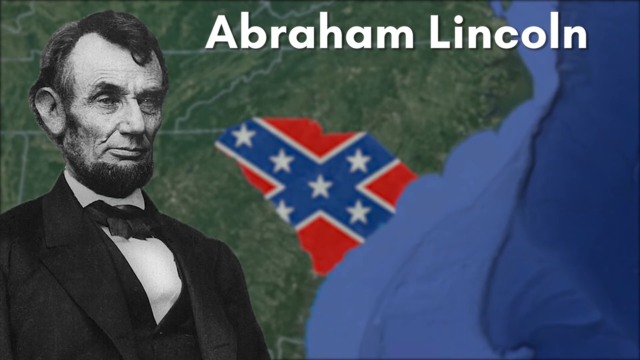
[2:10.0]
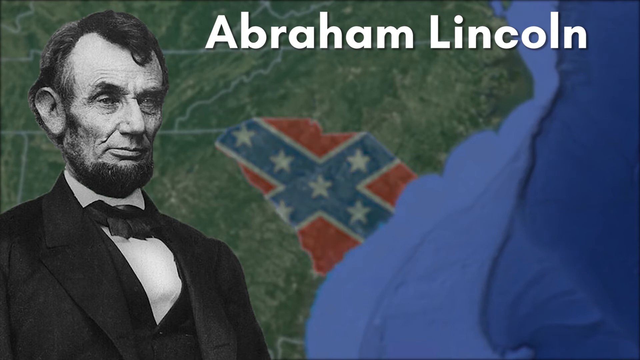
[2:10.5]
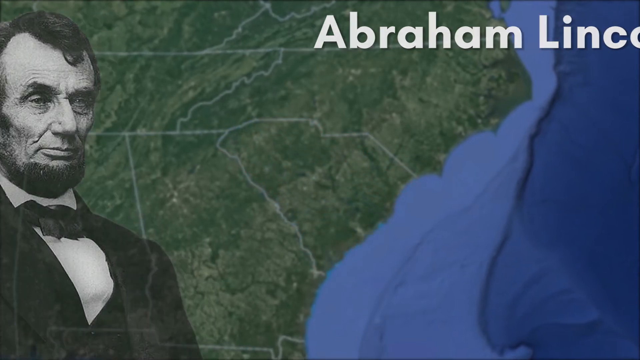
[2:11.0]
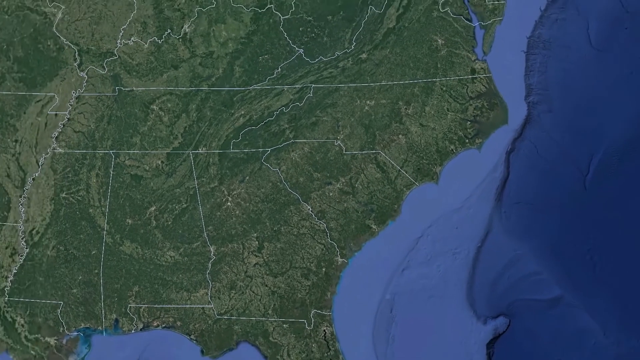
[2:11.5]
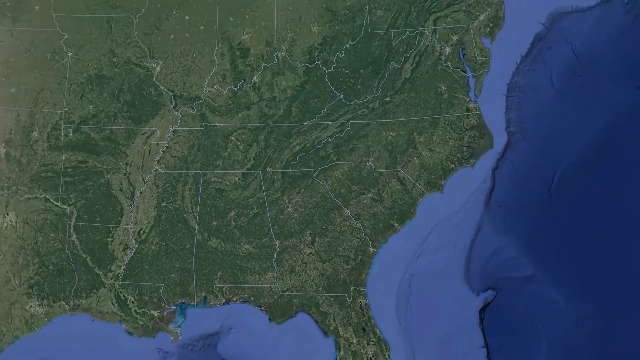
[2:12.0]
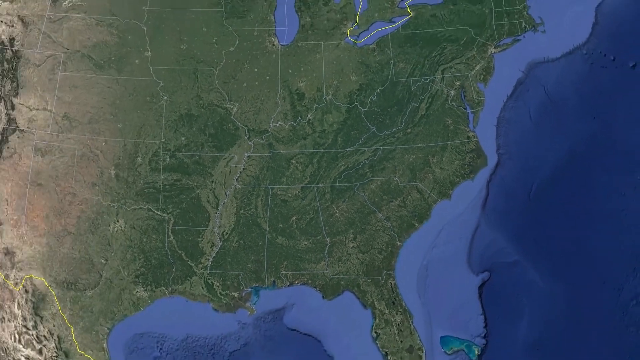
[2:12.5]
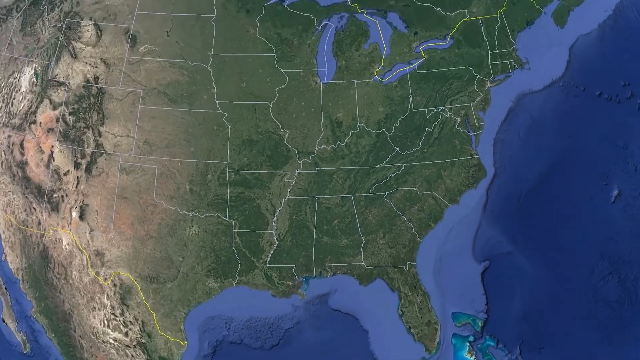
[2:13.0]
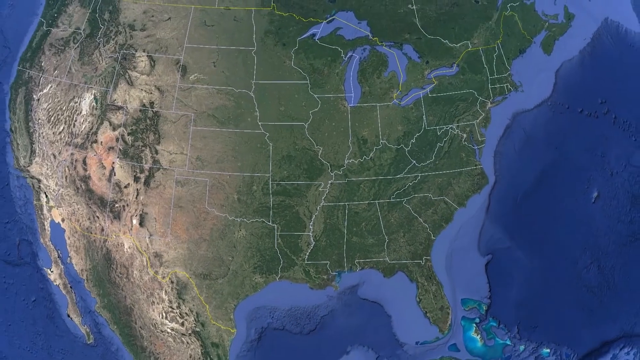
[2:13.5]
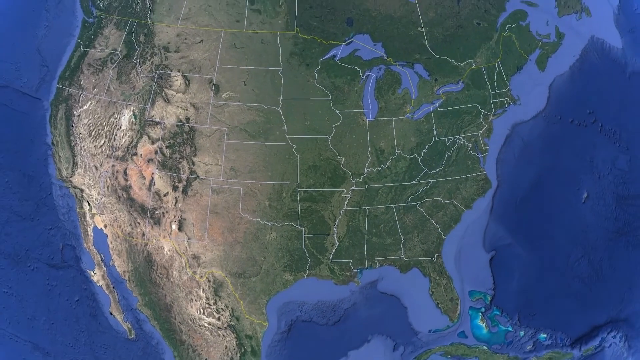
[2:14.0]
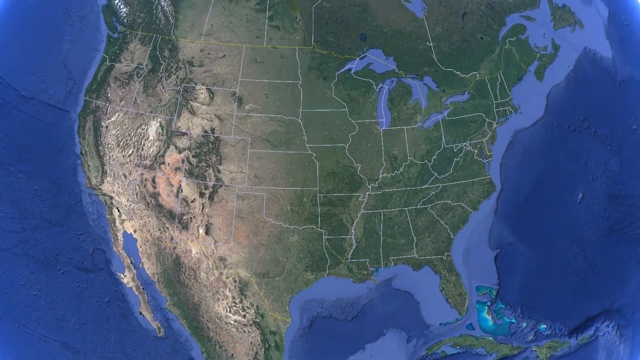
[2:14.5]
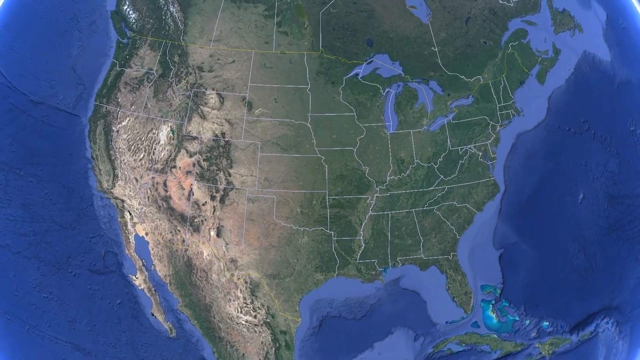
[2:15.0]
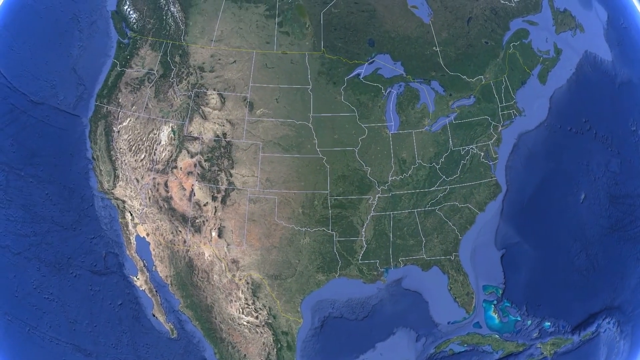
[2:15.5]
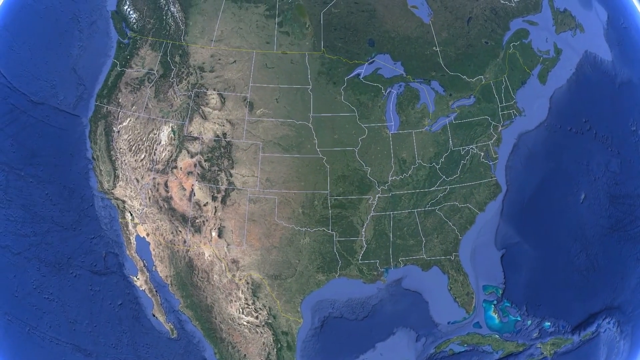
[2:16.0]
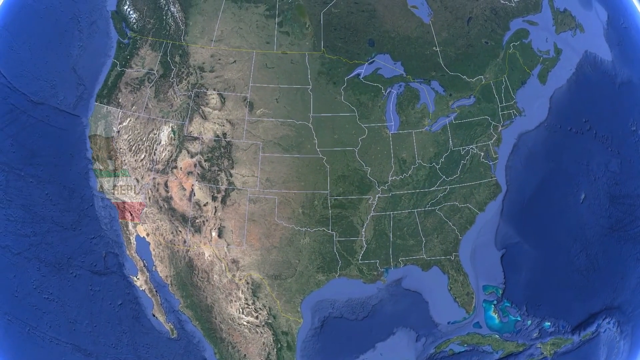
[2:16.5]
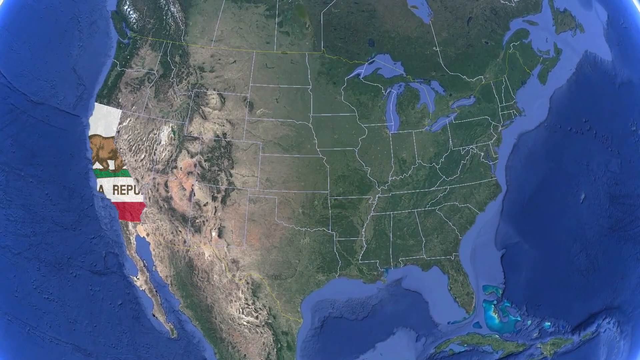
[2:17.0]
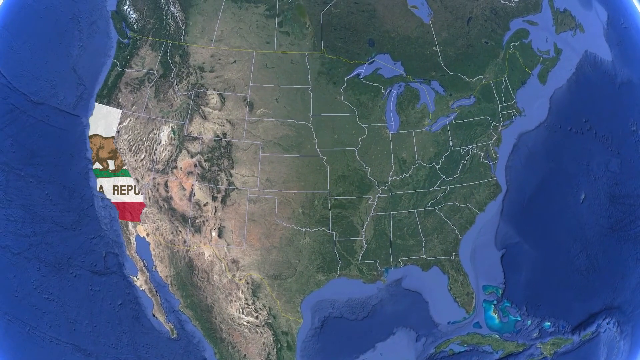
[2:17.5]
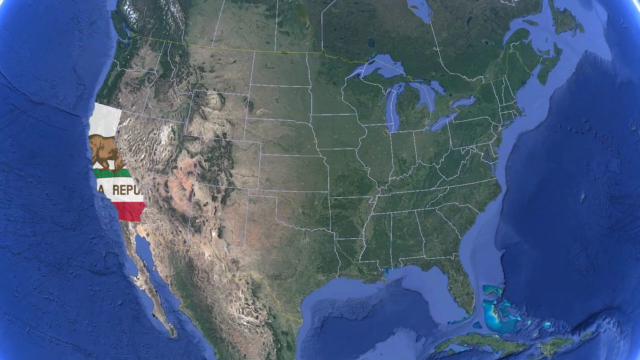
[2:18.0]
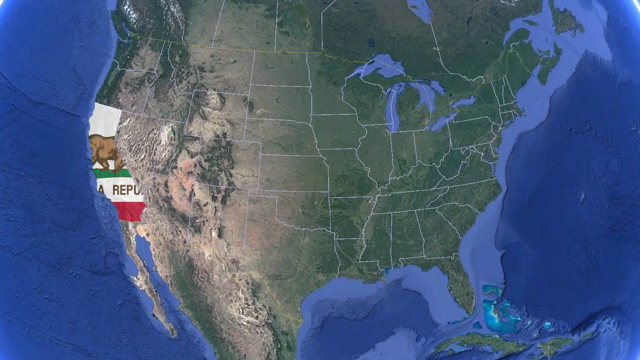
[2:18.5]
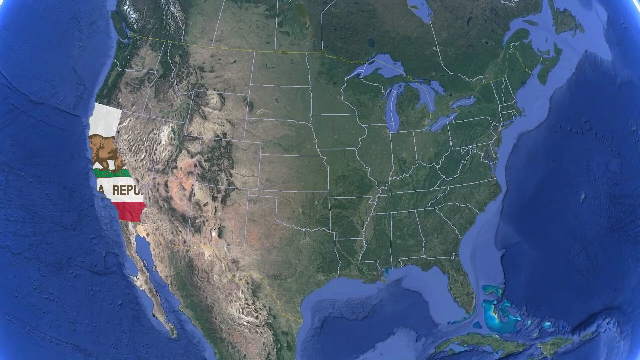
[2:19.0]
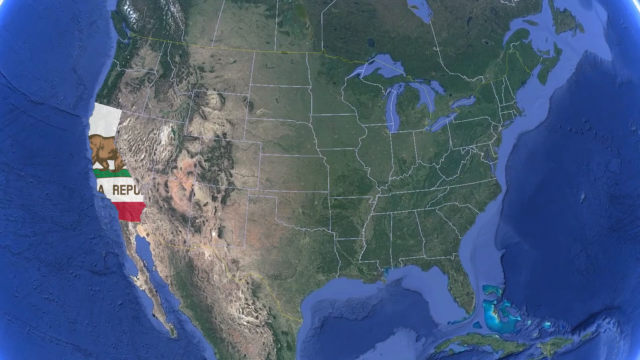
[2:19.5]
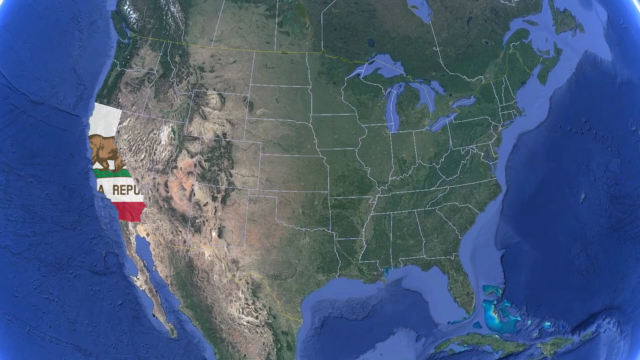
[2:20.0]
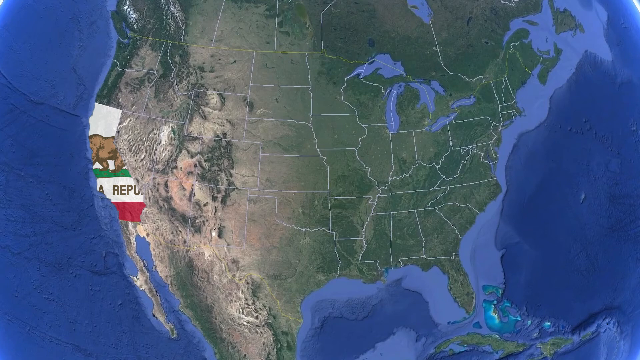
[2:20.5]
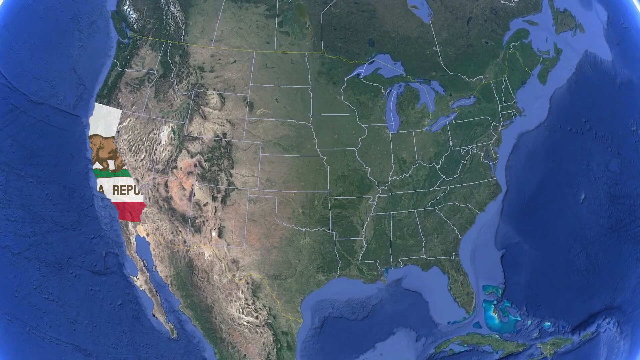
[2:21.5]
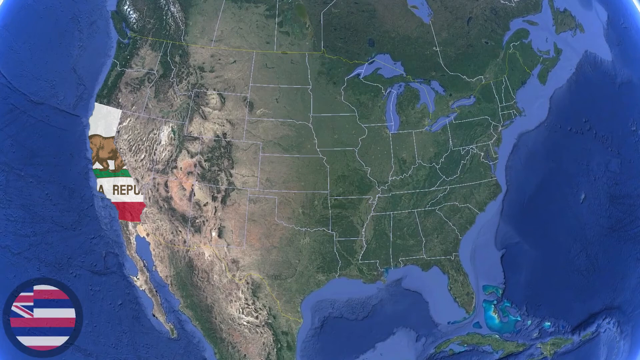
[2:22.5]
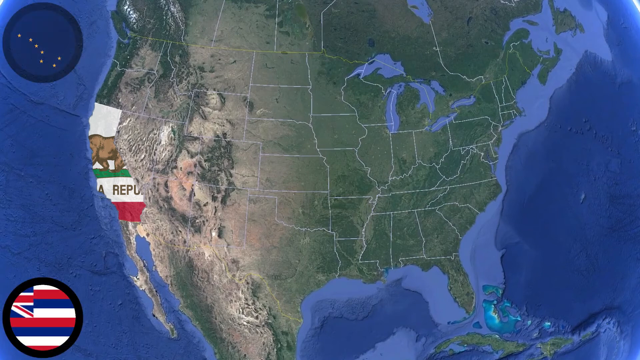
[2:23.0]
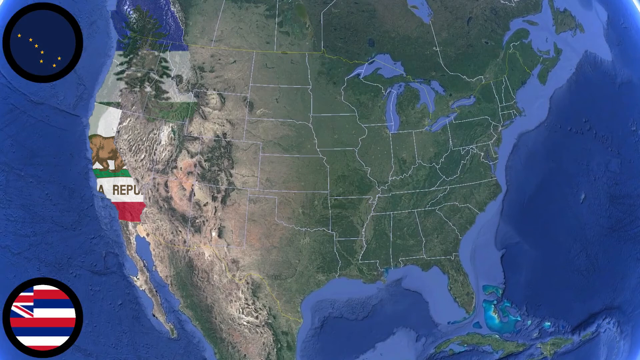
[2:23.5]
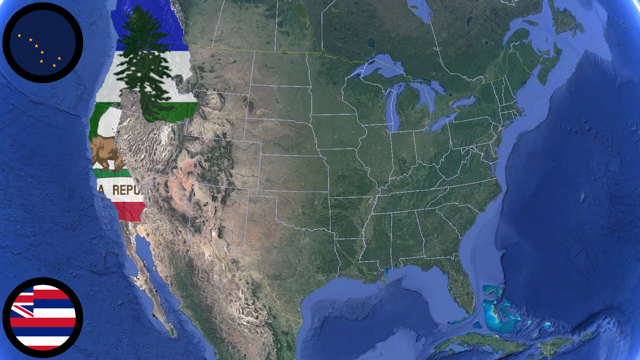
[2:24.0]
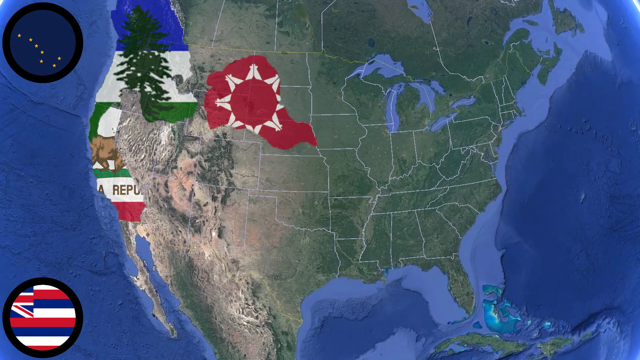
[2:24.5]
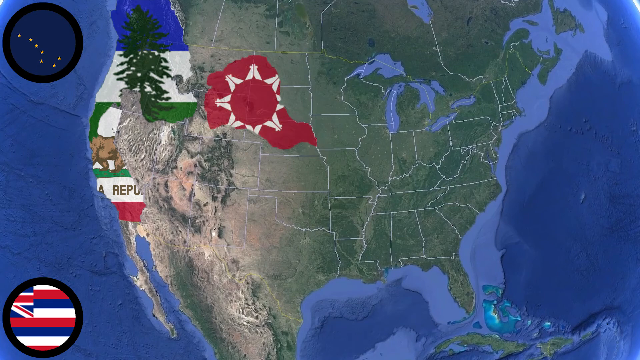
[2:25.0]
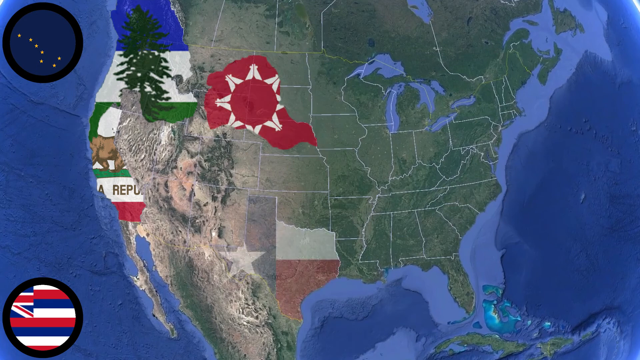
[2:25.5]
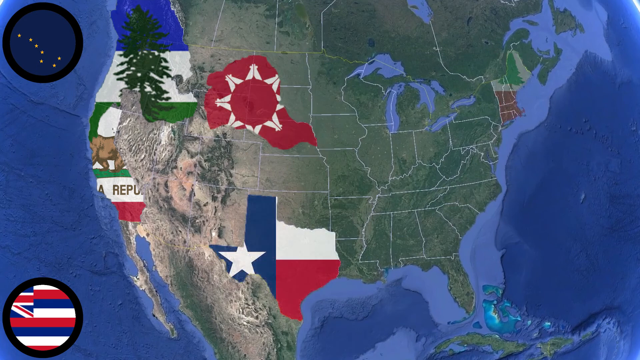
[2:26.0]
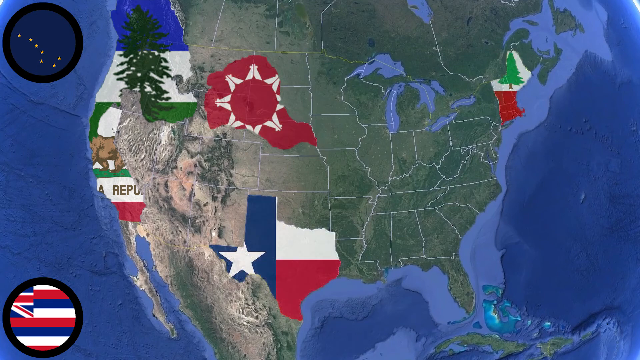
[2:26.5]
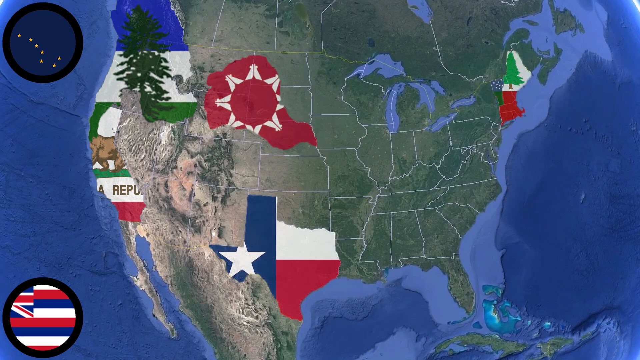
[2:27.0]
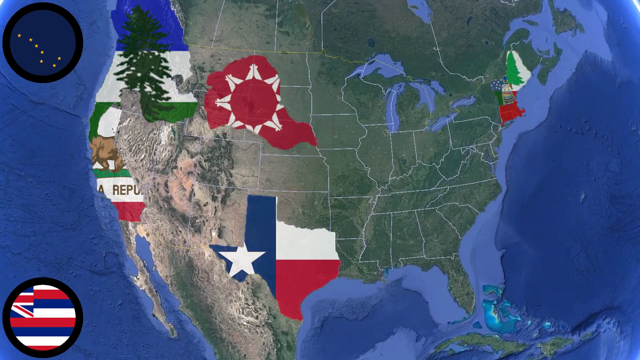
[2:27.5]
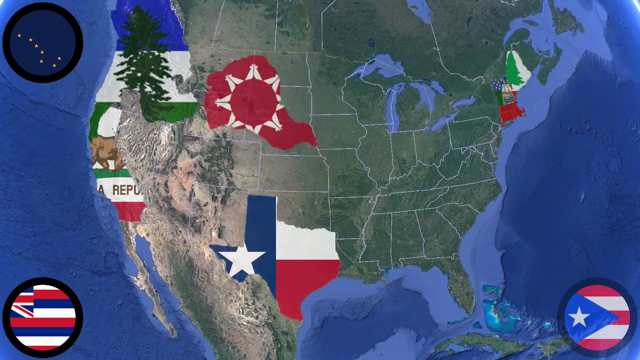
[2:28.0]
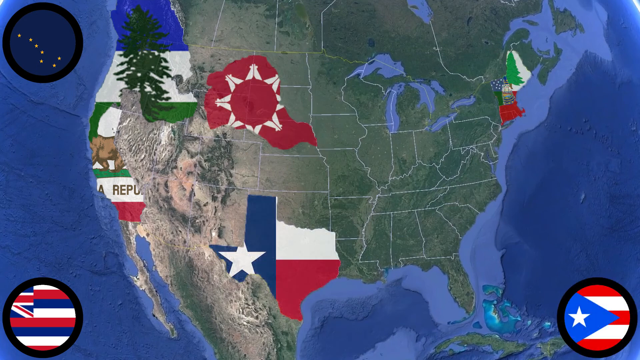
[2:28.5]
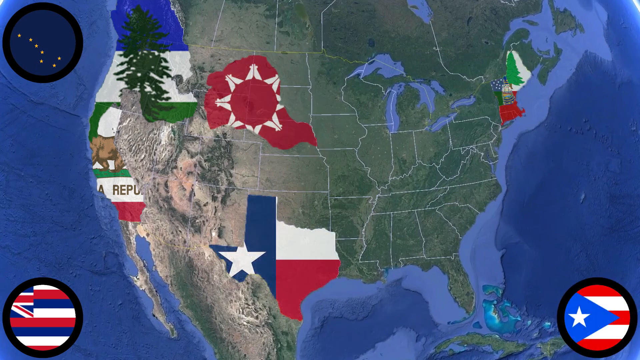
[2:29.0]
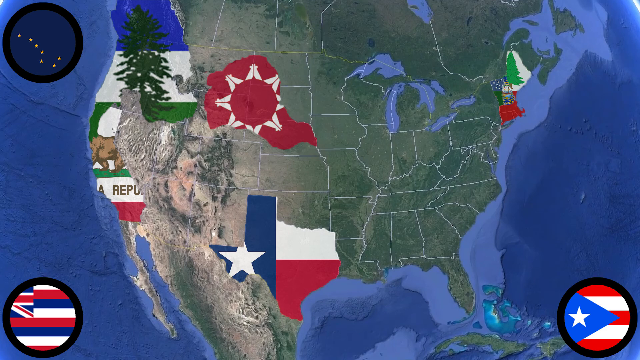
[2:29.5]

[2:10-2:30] Abraham Lincoln is shown looking over South Carolina as the map zooms out, with "Abraham Lincoln" in white letters. As the map zooms back out to outer space, South Carolina and the other states are no longer colored in; only the state lines and the mountainous terrain are visible. California is then colored in alone with its state flag. Different areas of certain states are colored in, up to Washington State and Oregon. Texas is colored in, along with pieces of the Midwest in Wyoming, then Vermont, apparently parts of New Hampshire, and a little bit of Maine. Different flags are portrayed on the side, encompassed in circles; California's shows a bear, and its colors are green, white and red.